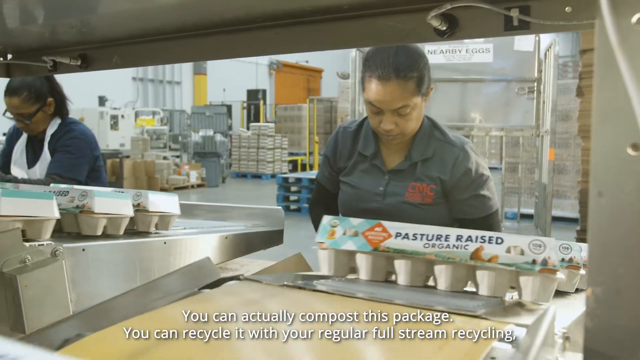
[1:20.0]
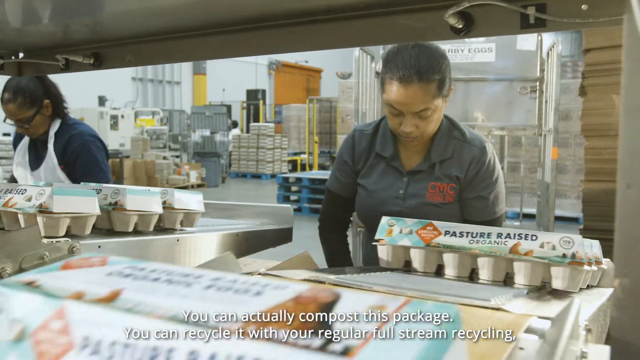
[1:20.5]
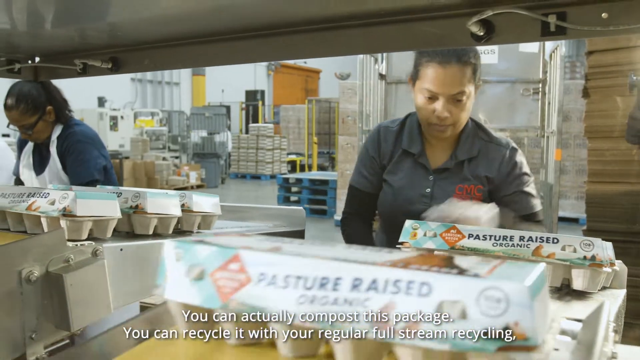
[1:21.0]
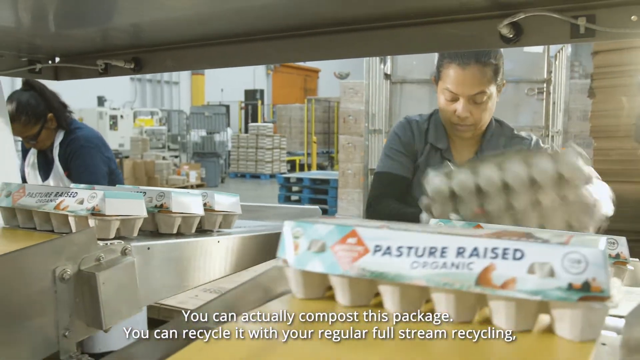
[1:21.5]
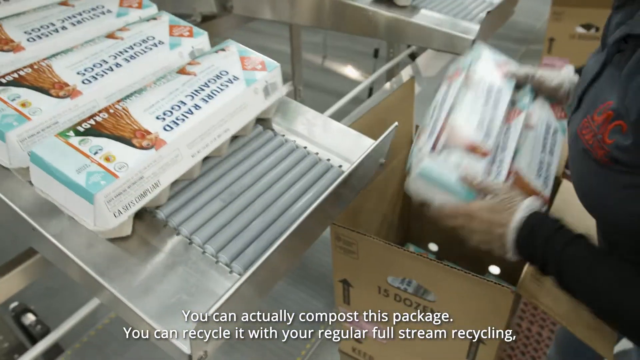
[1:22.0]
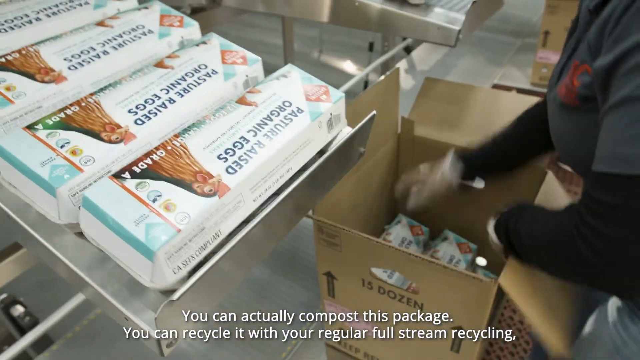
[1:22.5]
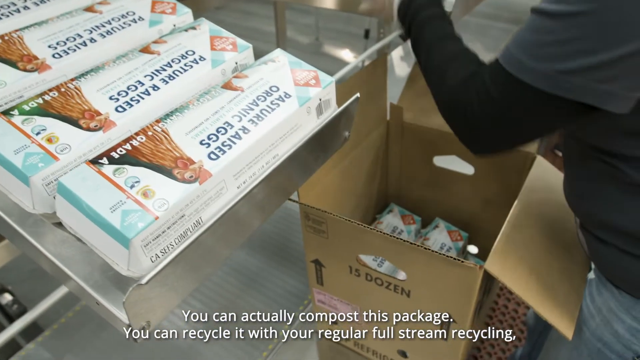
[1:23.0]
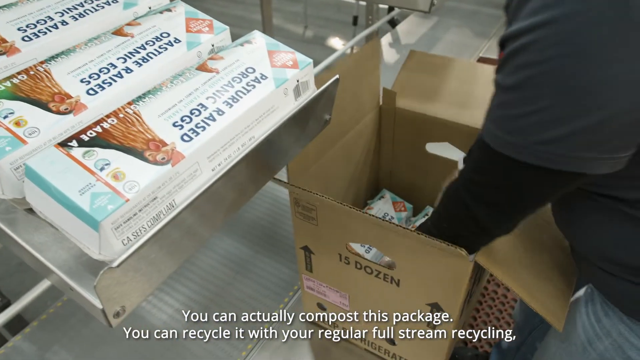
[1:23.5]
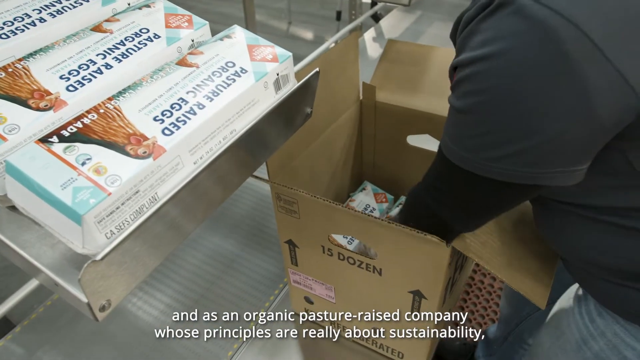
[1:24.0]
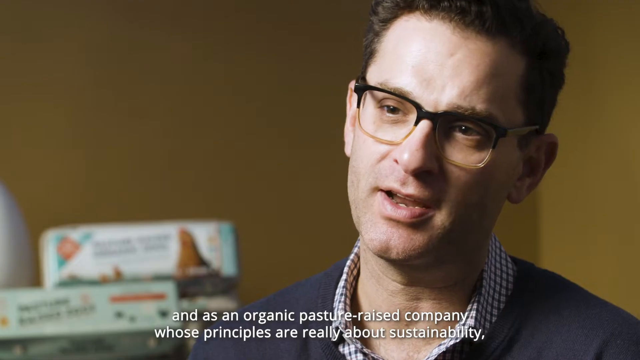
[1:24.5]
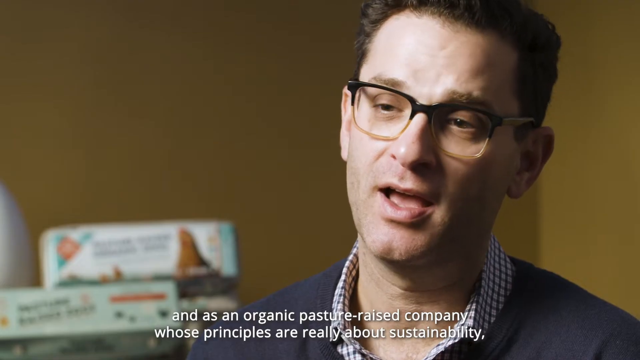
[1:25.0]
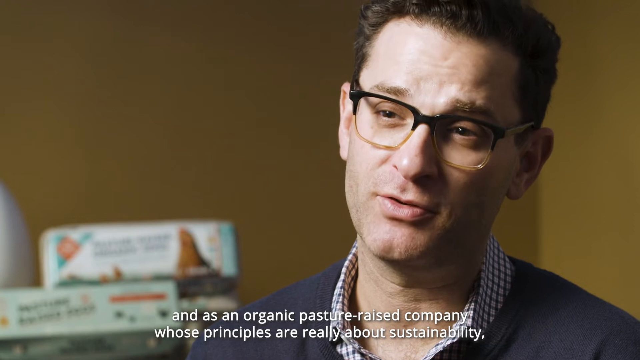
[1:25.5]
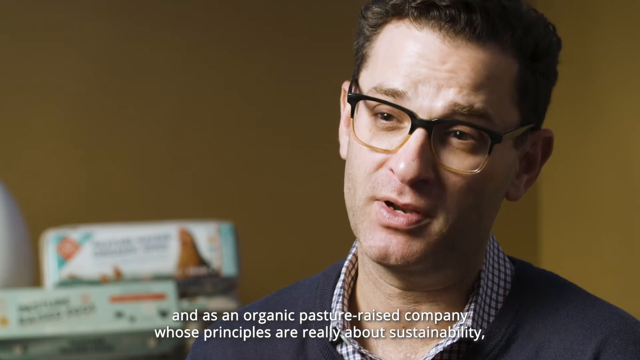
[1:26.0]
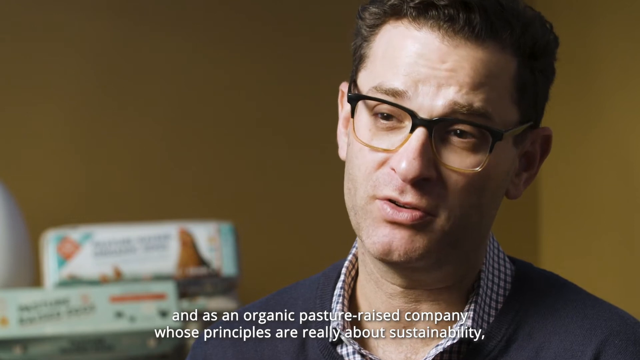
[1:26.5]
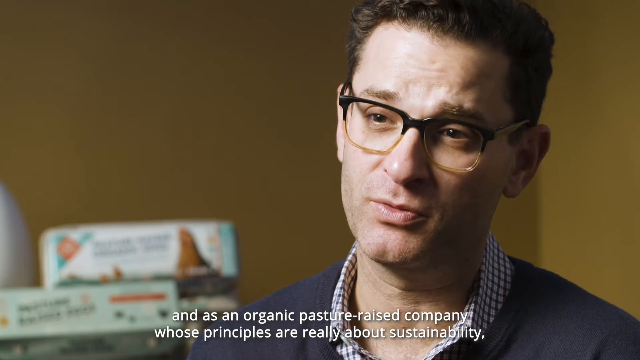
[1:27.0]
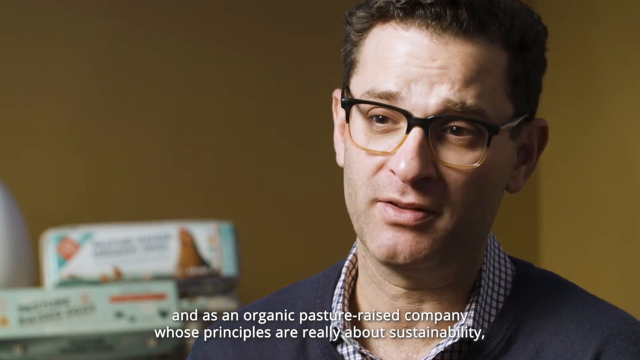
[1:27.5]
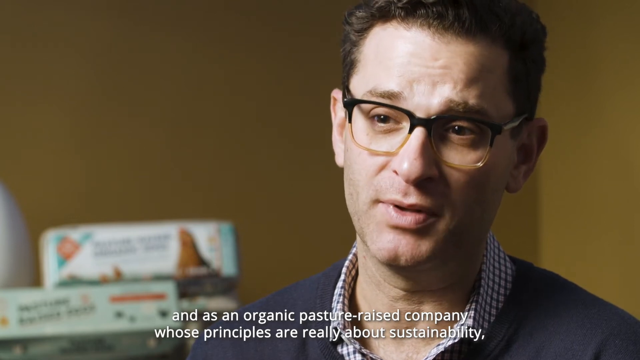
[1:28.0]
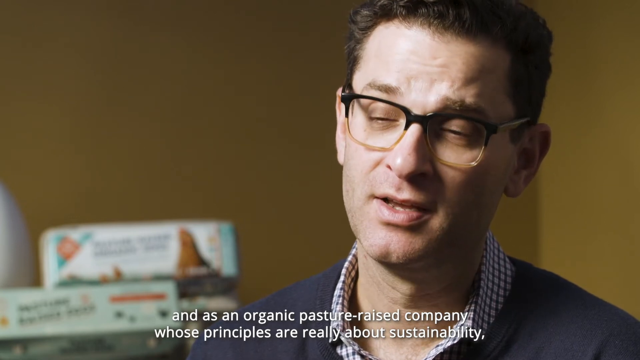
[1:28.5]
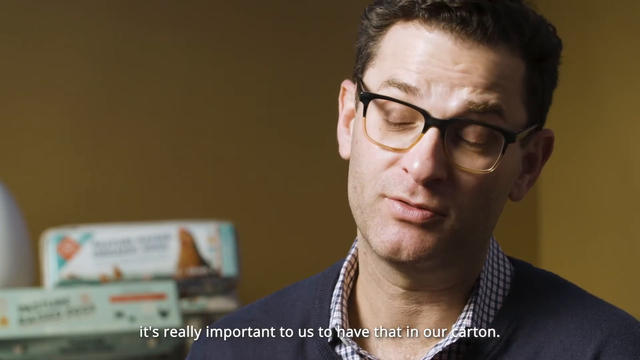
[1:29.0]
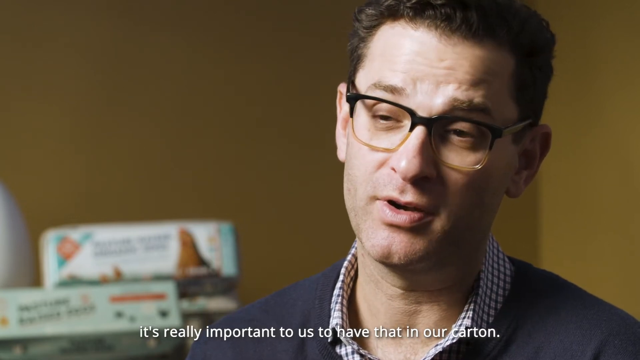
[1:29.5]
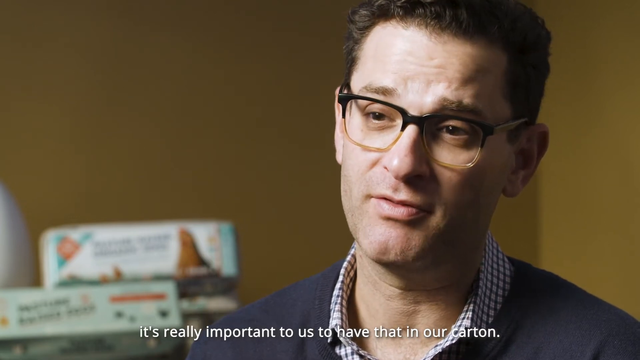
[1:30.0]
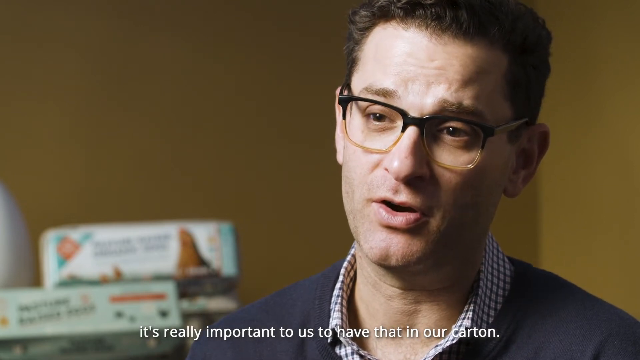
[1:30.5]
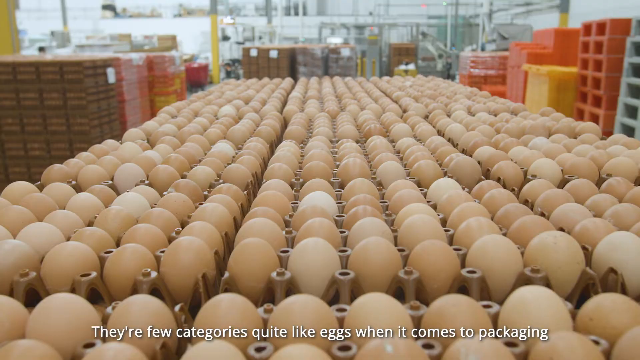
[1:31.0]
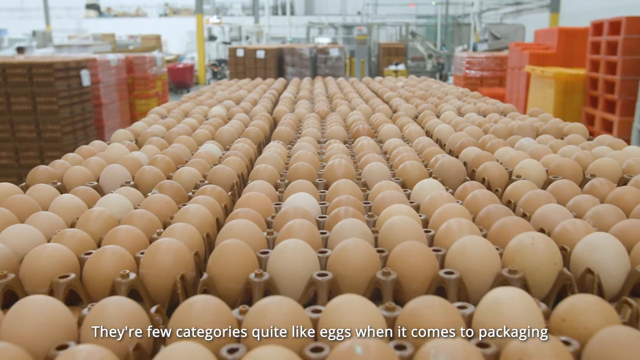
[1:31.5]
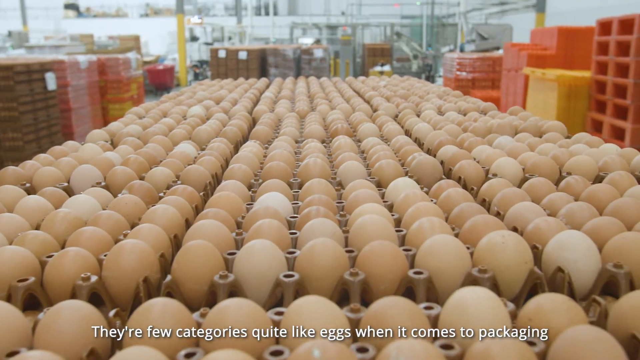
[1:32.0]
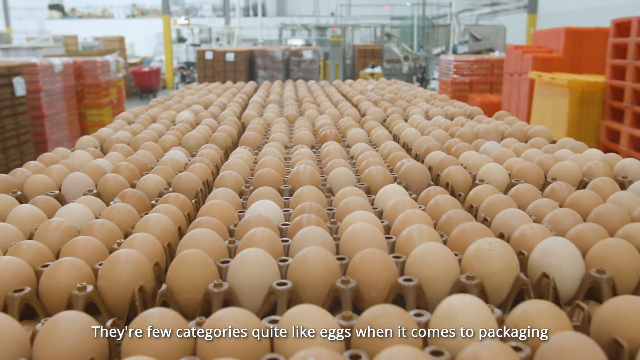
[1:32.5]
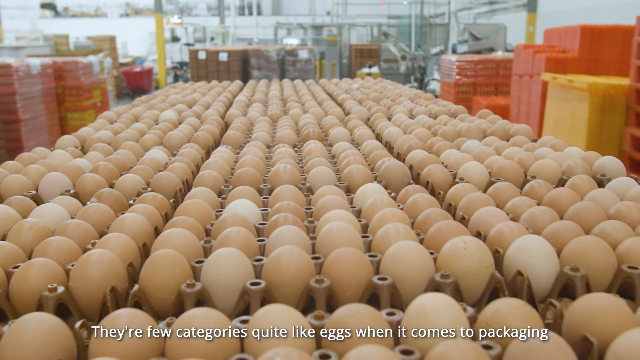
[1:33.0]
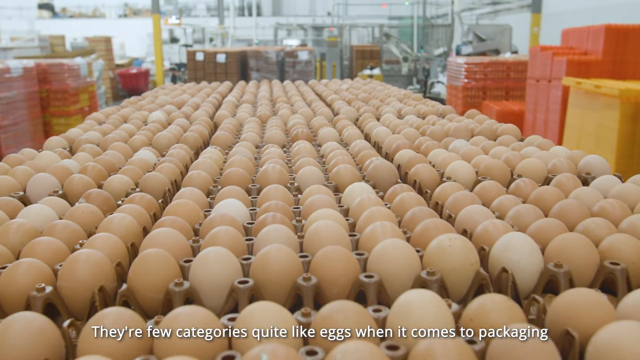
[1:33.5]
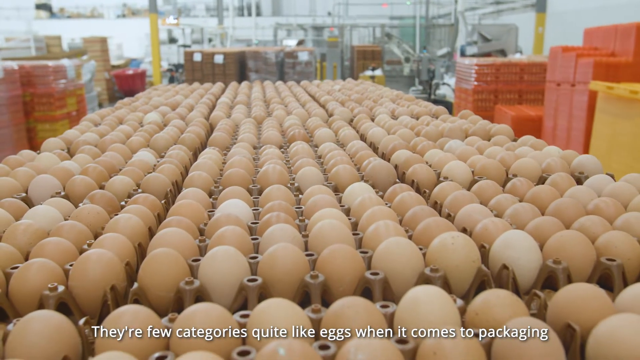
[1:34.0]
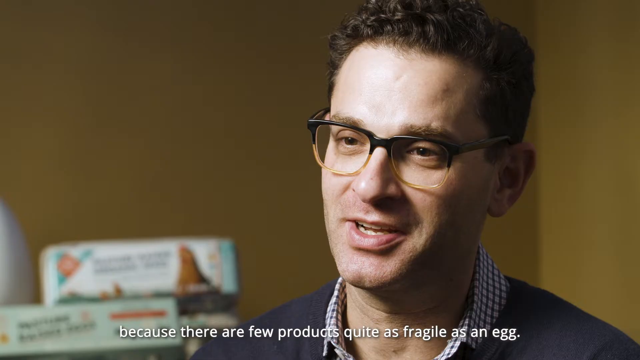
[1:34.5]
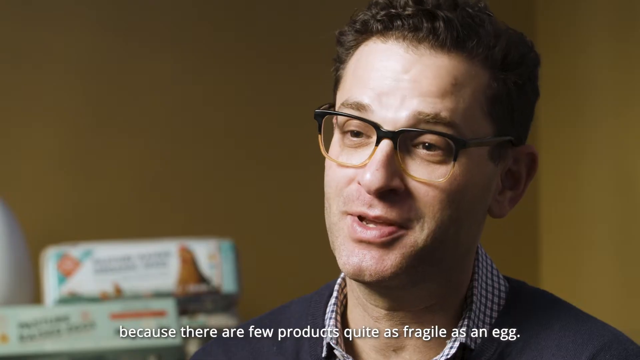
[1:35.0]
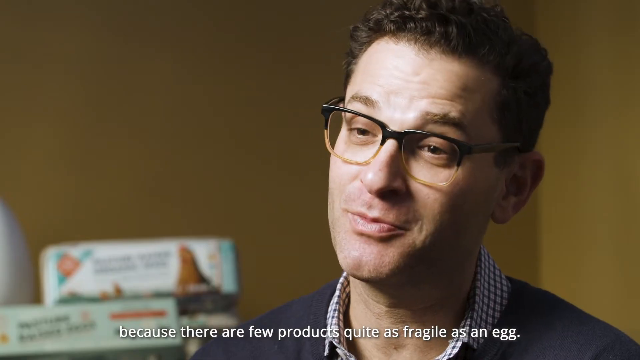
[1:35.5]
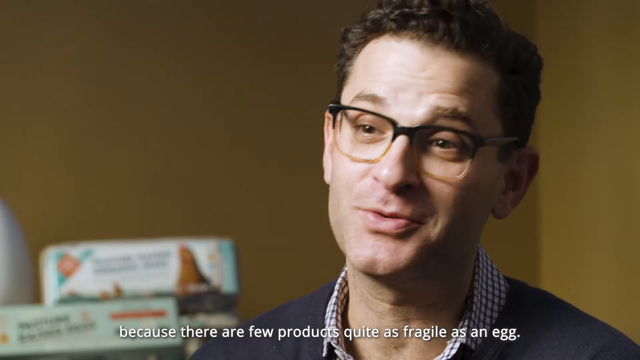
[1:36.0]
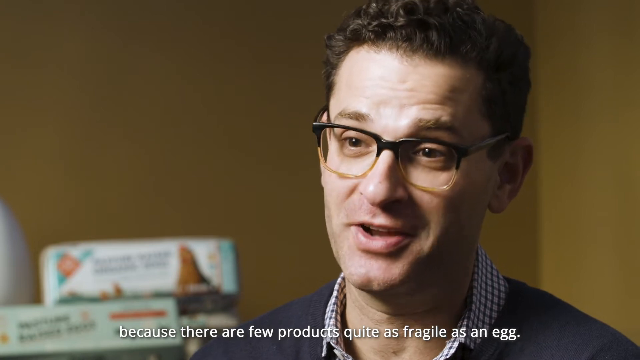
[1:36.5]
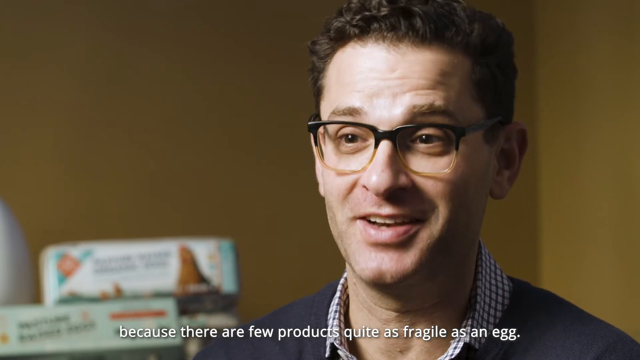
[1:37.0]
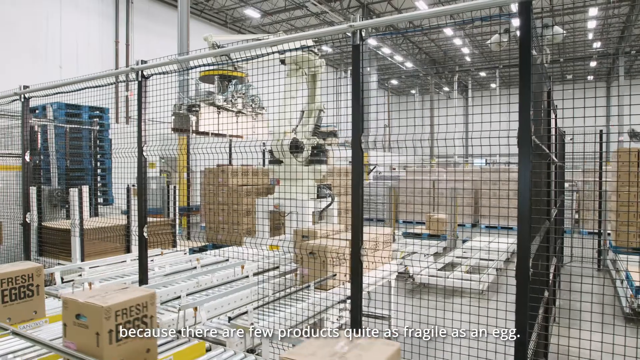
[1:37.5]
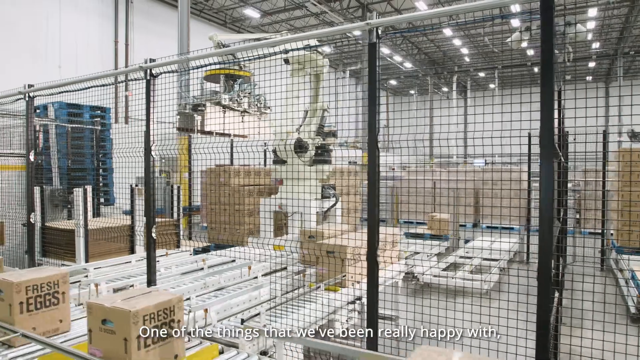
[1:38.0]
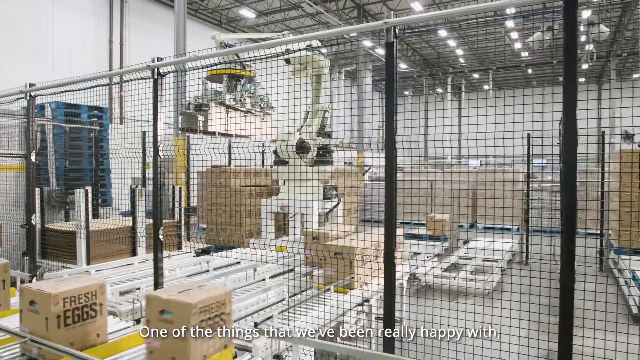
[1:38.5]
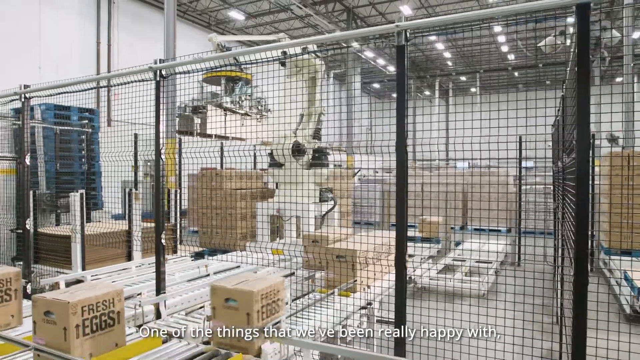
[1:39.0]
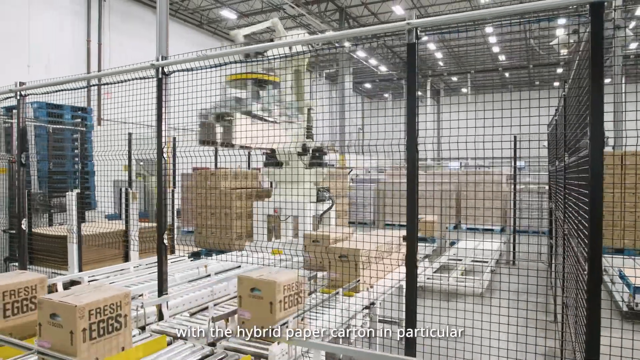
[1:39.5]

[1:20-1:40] Subtitles read: "You can actually compost this package. You can recycle it with your regular full stream recycling. and as an organic pasture-raised company whose principles are really about sustainability. it's really important to us to have that in our carton. There are a few categories quite like eggs when it comes to packaging because there are few products quite as fragile as an egg. One of the things that we've been really happy with..." Two factory workers, both women, take the filled egg boxes off the production line. A close-up shows one of the women putting the egg boxes into a large cardboard box. The video cuts back to the interviewee, who is still talking quite earnestly. Hundreds of eggs are wheeled through a factory on a trolley. The interviewee appears once more, followed by factory footage of the egg boxes continuing down the production line.